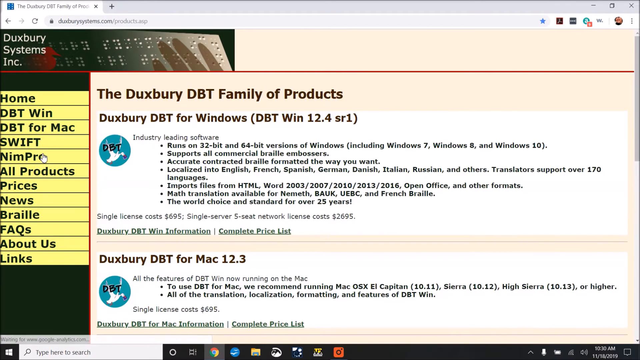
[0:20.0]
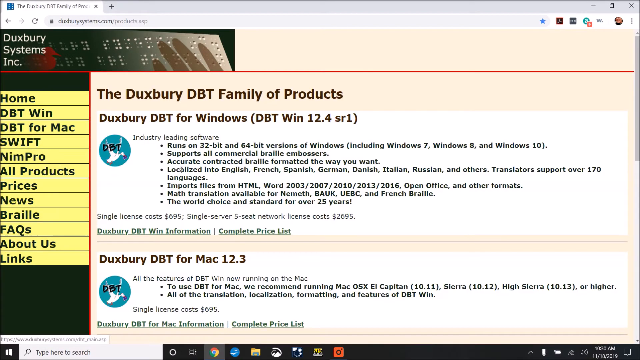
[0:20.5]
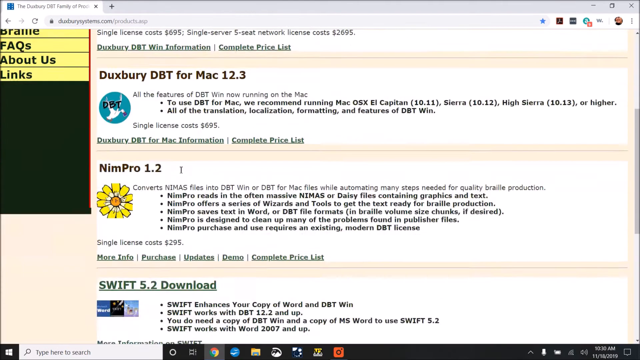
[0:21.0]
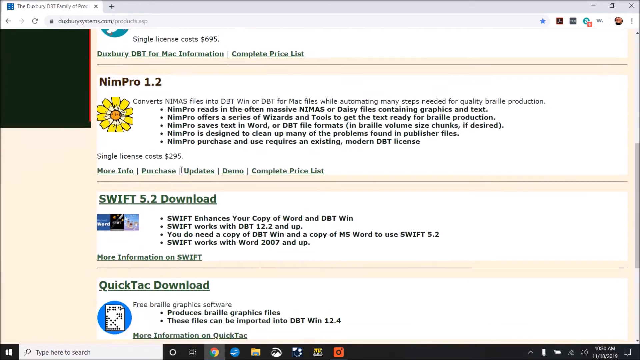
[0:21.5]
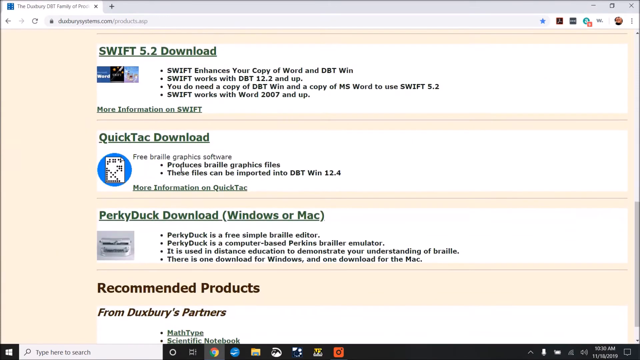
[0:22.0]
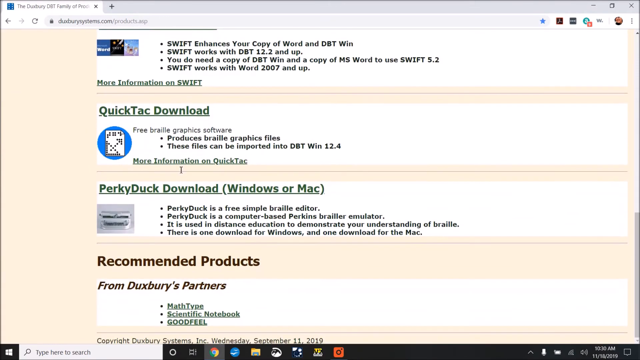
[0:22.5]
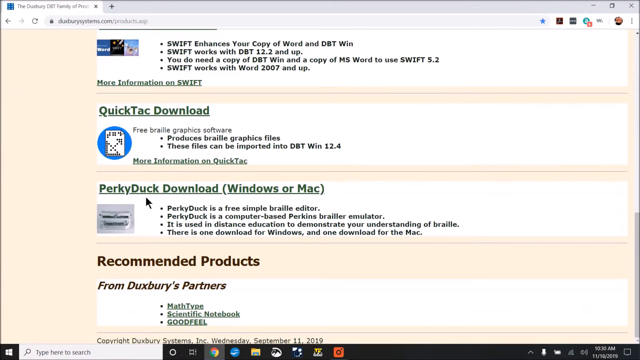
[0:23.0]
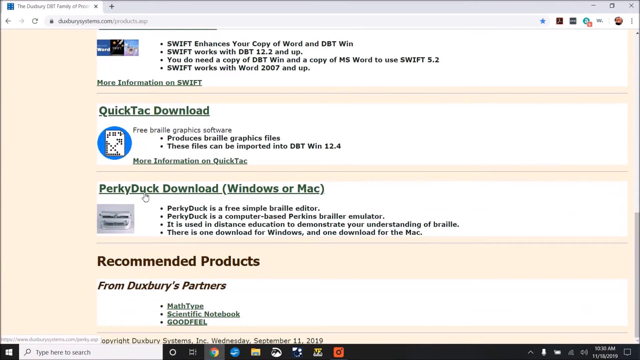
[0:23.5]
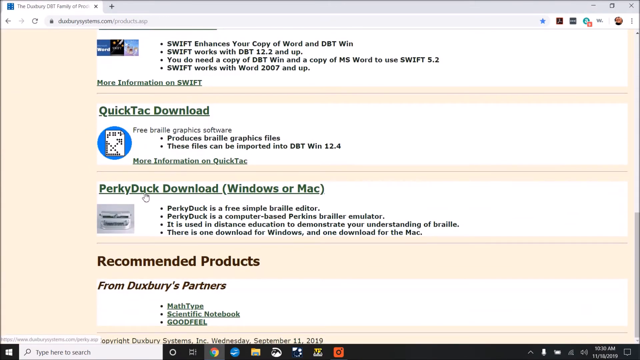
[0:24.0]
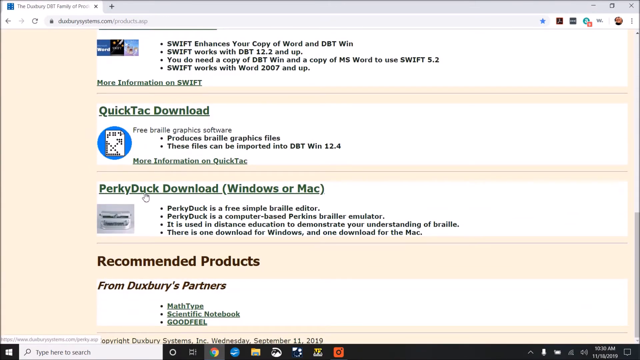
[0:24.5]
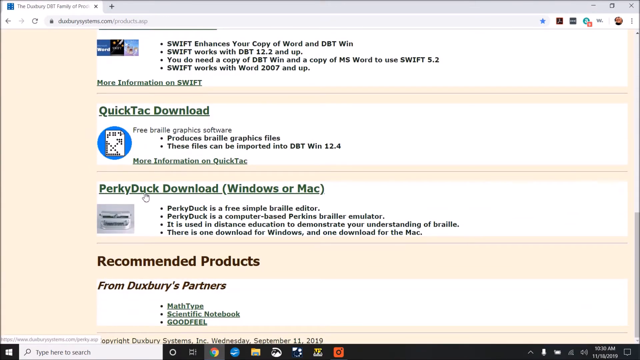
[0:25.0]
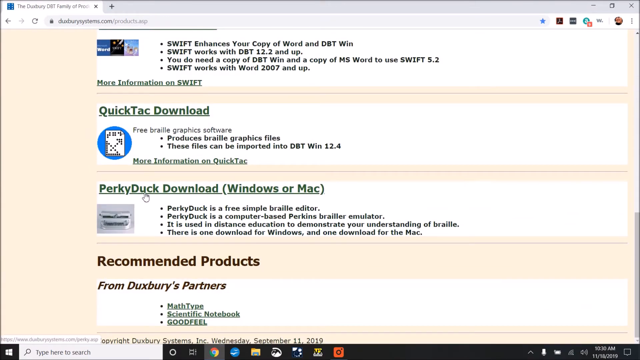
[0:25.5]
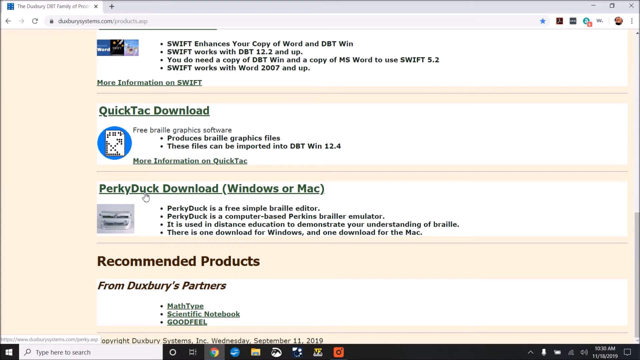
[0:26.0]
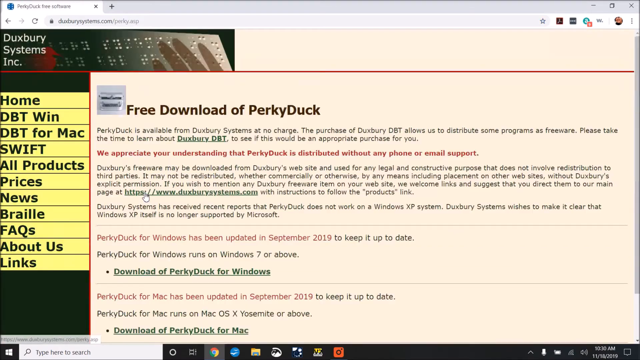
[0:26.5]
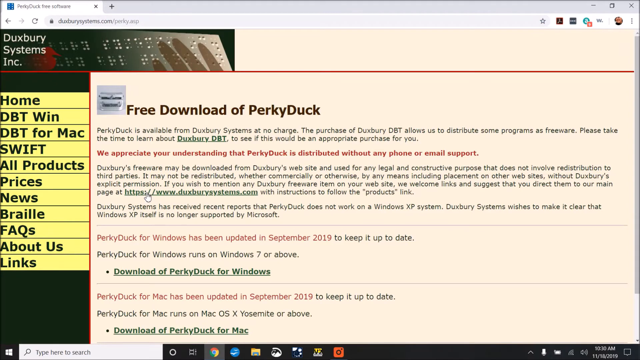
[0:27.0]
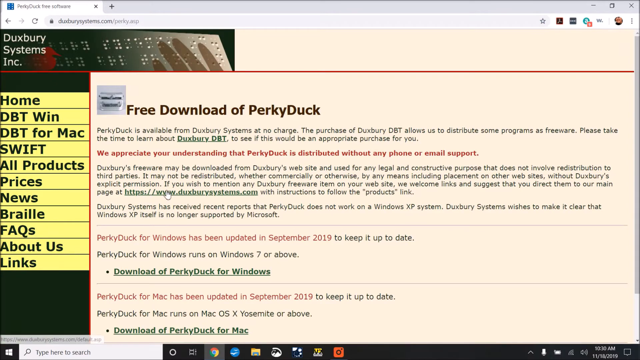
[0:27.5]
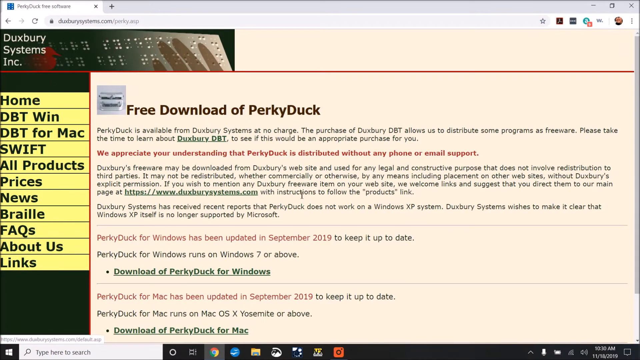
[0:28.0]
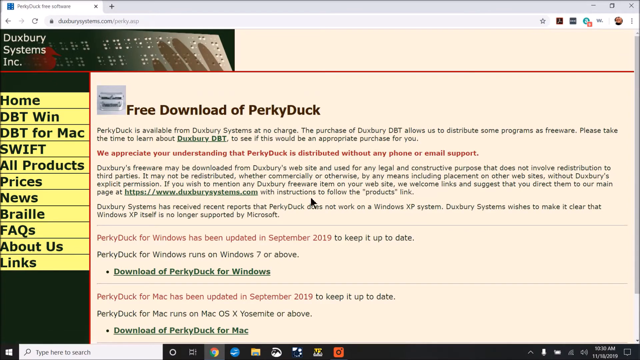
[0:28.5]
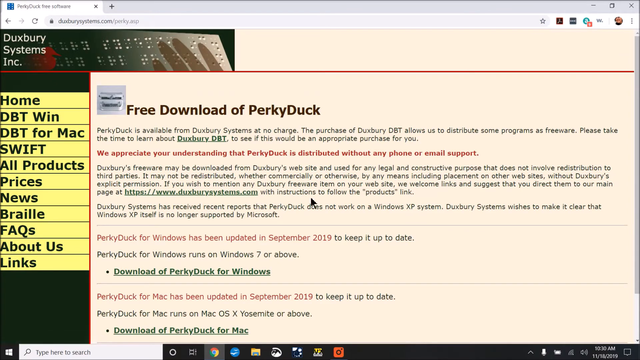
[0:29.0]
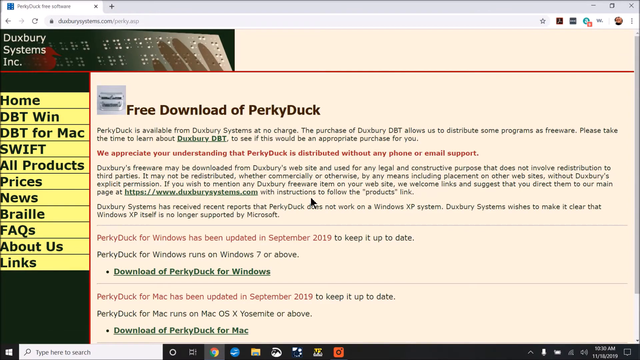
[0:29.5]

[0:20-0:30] After All Products is clicked, a page listing a number of versions appears, titled "the Duxbury DBT family of products". The first entry is Duxbury DBT for Windows, with "ebtwin12.4sr1" in brackets, followed by a short description with seven bullet points. Below that is information about the server license: a single license costs $695, and a single-server, five-seat network license costs $2,695. There are links for Windows information and a complete price list. Below that is Mac, and the user scrolls through the page, past NIMPRO 1.2, SWIFT 5.2, a QuickTag download, a Perky Duck download, and a recommended products section below that says "from Duxbury's partners" and lists MathType, Scientific Notebook and GoodFeel. The user hovers the mouse over the Perky Duck option and clicks on it, opening the free download page for Perky Duck, a version with no charge. The page contains a lot of text; one line near the top is in red and says "we appreciate your understanding that Perky Duck is distributed without any phone or email support."